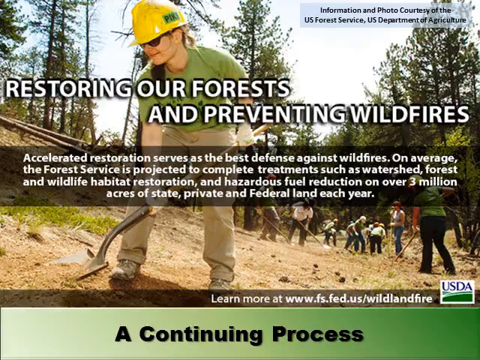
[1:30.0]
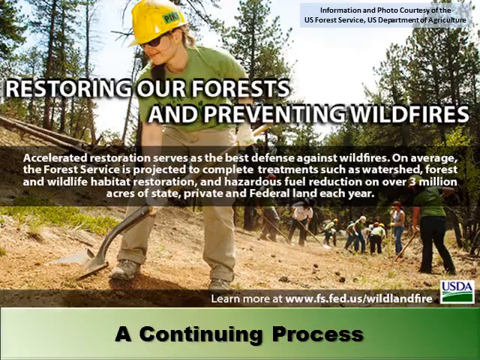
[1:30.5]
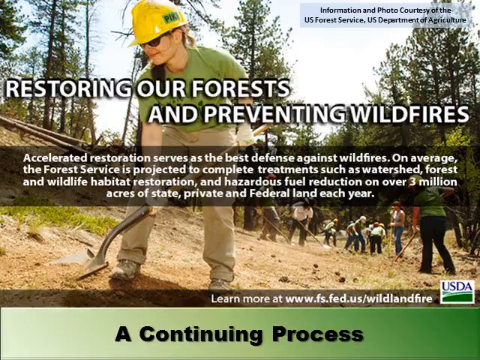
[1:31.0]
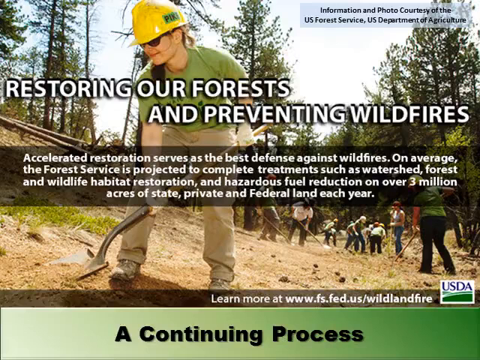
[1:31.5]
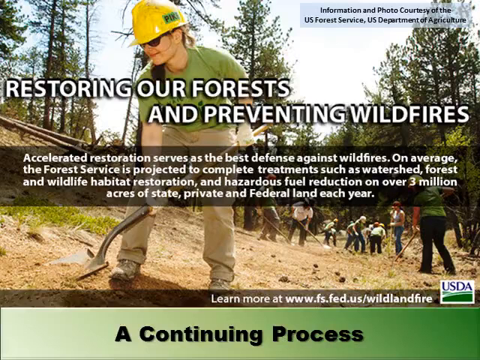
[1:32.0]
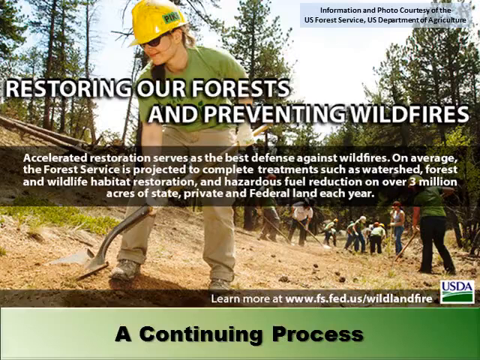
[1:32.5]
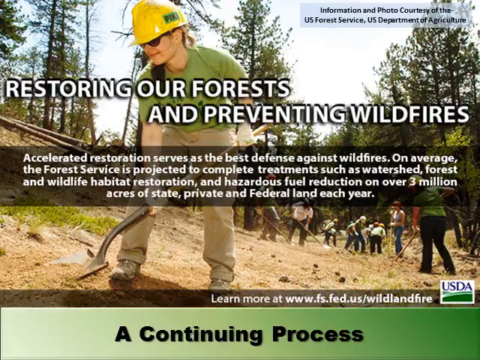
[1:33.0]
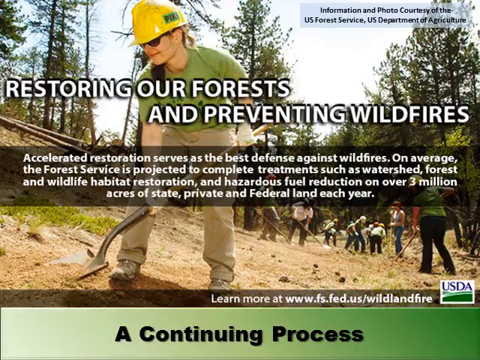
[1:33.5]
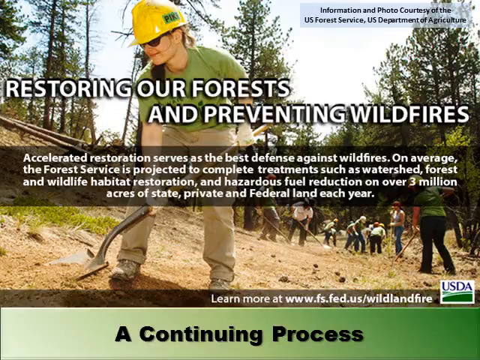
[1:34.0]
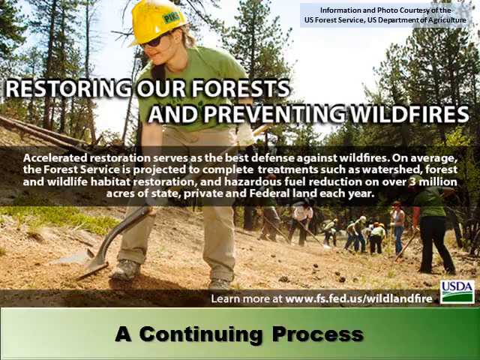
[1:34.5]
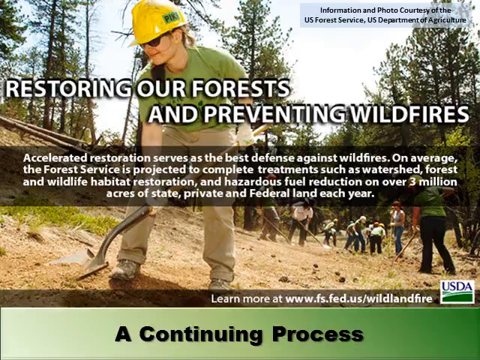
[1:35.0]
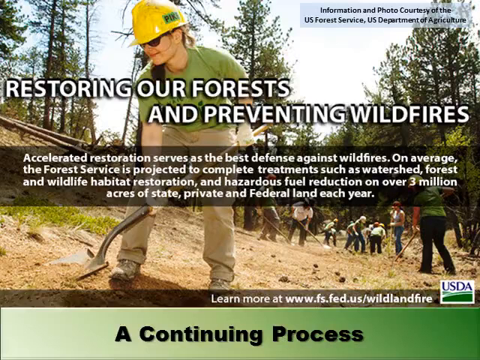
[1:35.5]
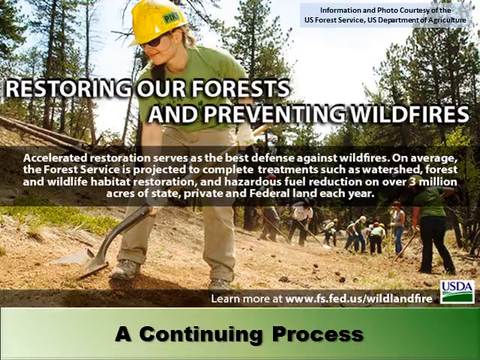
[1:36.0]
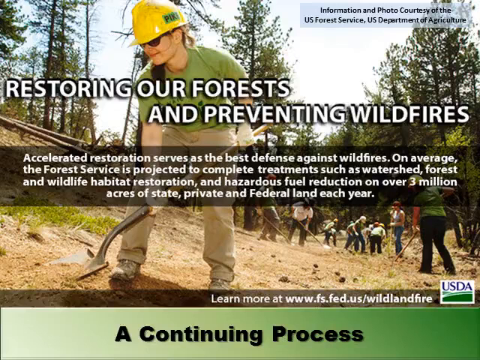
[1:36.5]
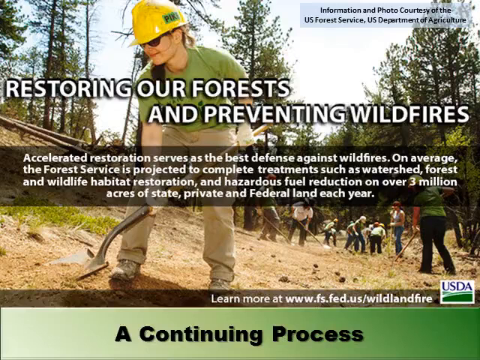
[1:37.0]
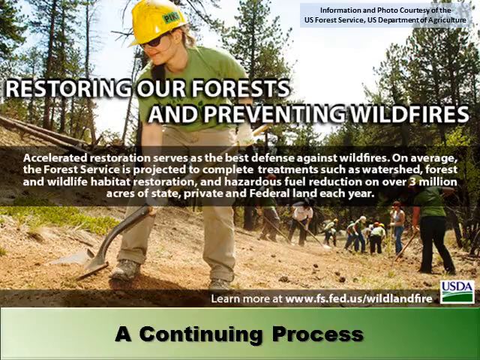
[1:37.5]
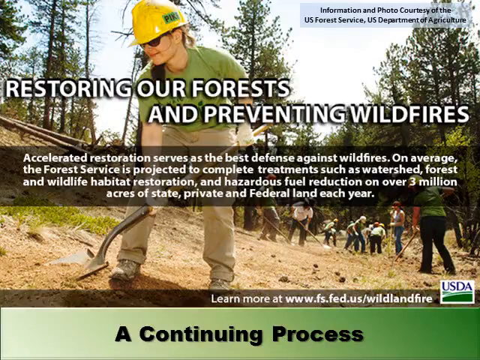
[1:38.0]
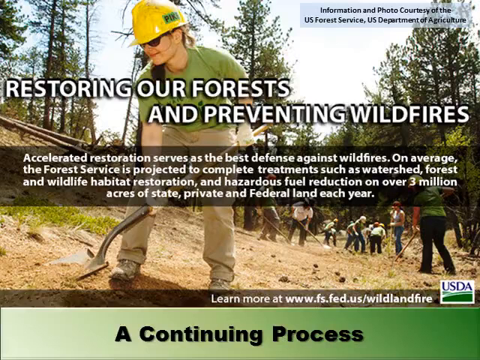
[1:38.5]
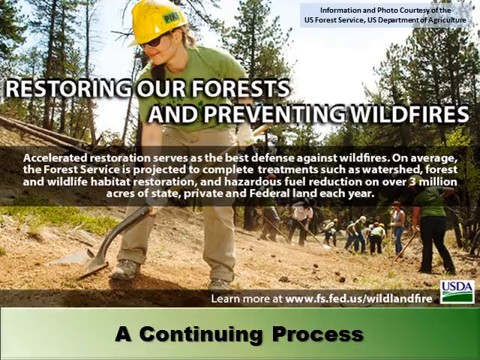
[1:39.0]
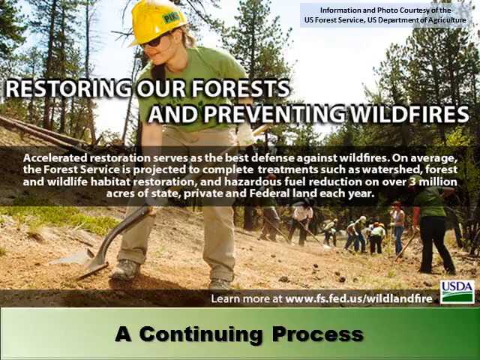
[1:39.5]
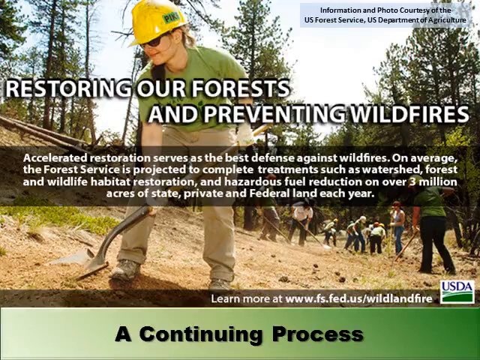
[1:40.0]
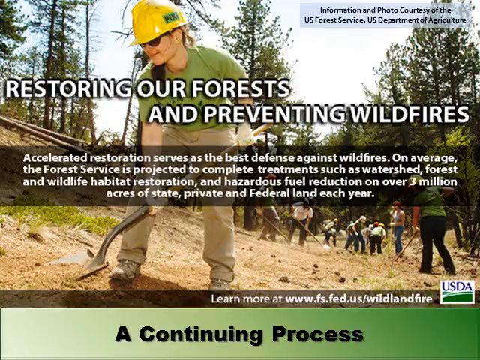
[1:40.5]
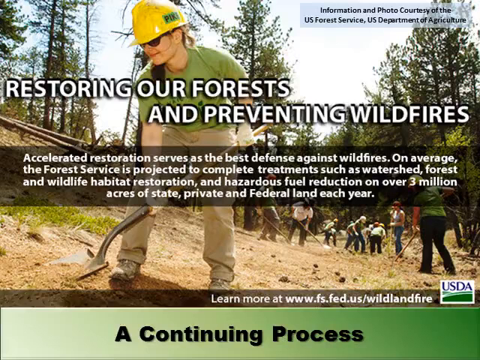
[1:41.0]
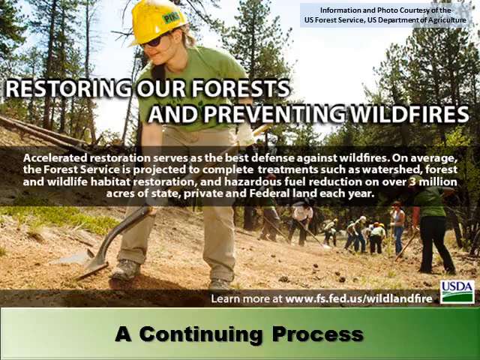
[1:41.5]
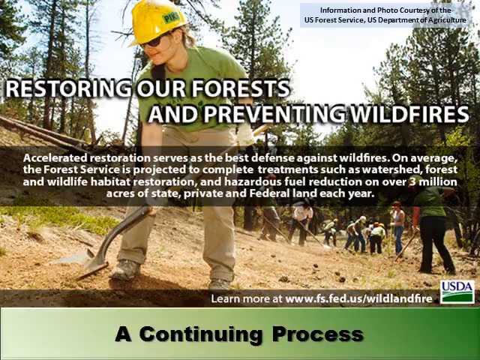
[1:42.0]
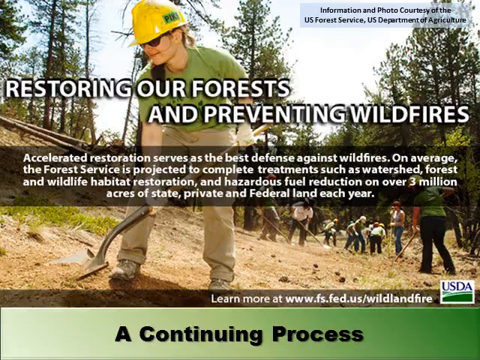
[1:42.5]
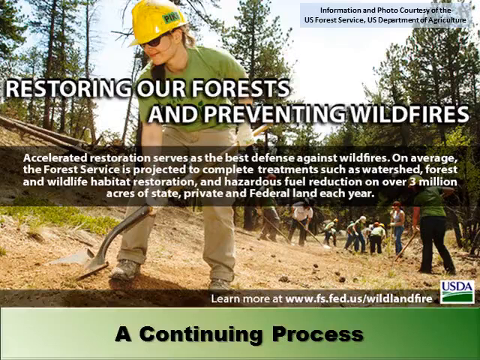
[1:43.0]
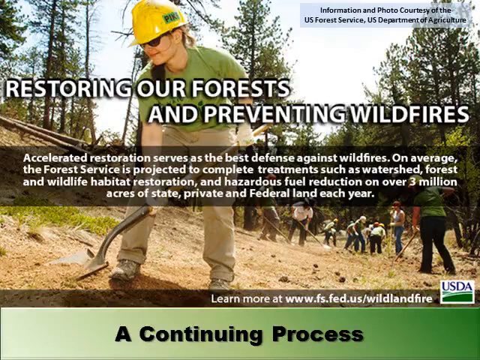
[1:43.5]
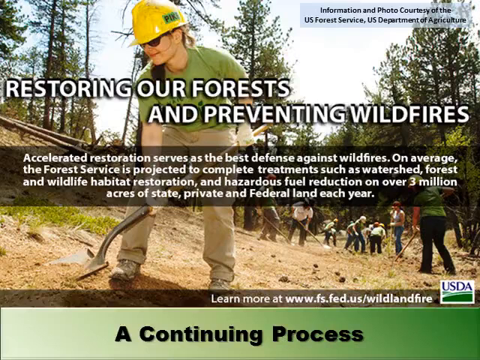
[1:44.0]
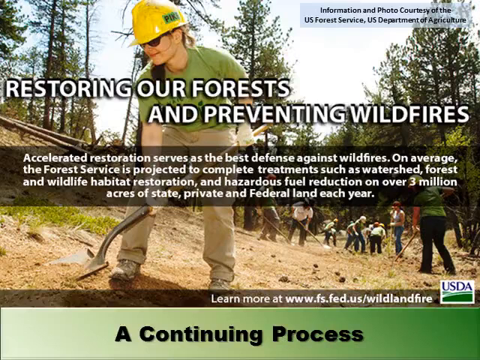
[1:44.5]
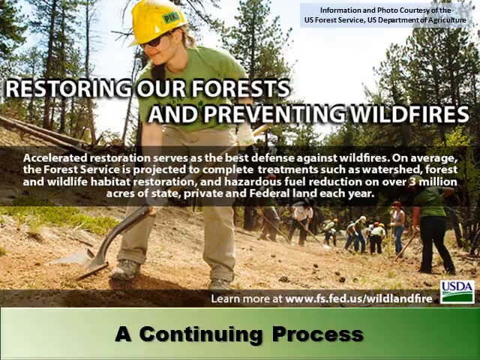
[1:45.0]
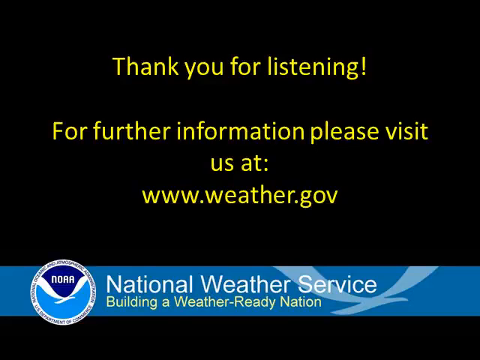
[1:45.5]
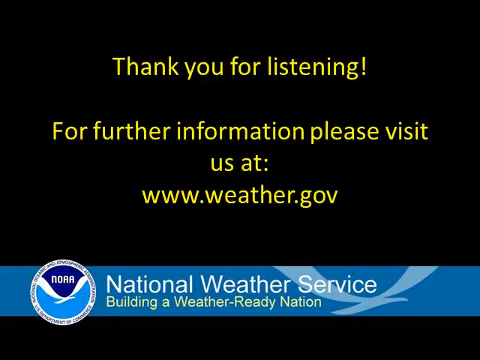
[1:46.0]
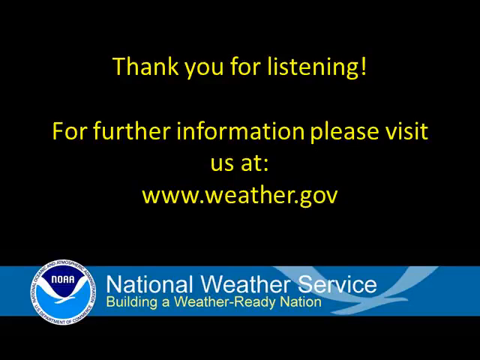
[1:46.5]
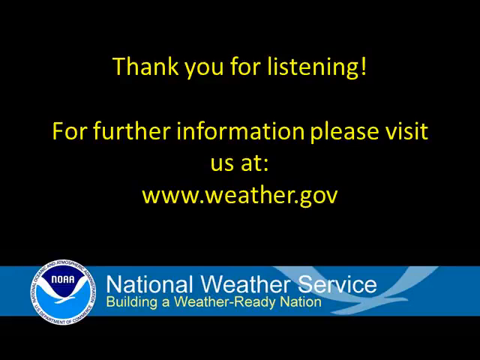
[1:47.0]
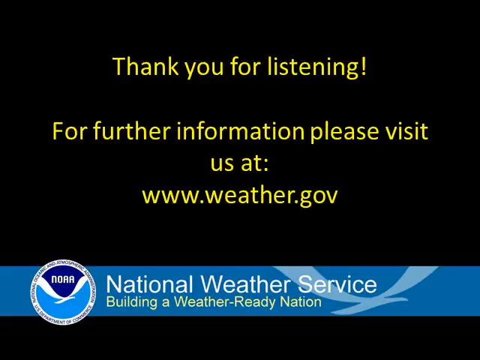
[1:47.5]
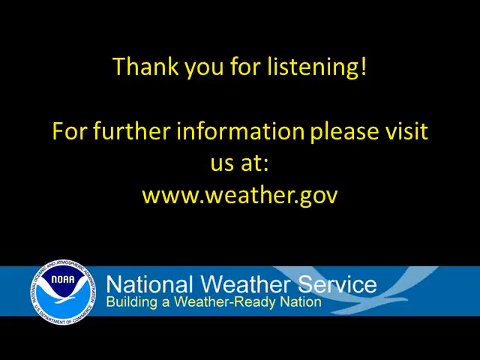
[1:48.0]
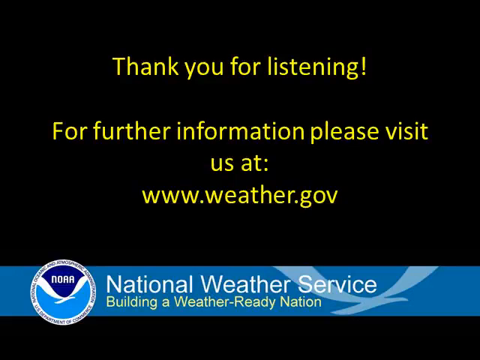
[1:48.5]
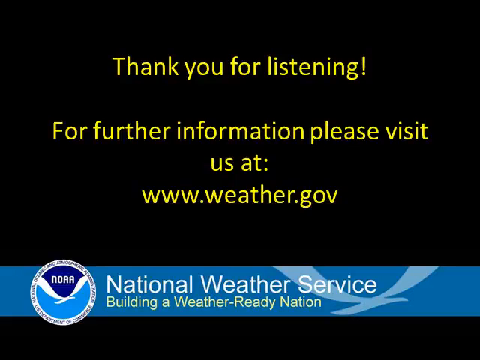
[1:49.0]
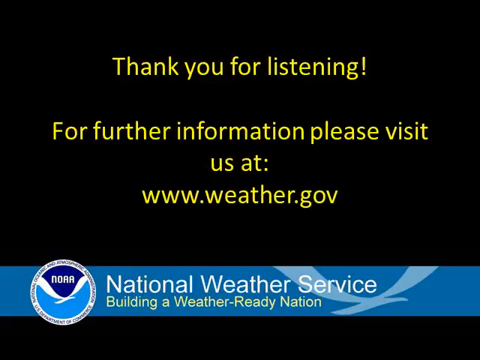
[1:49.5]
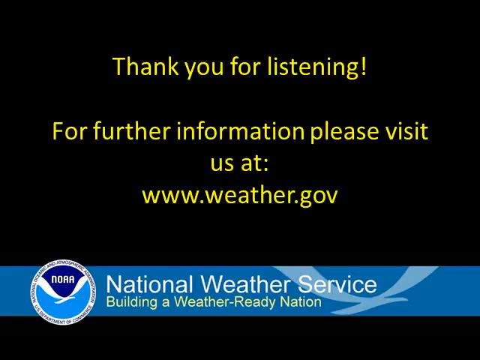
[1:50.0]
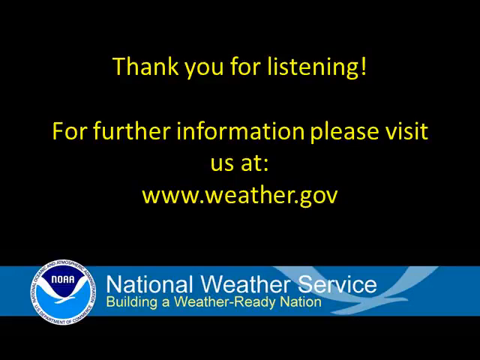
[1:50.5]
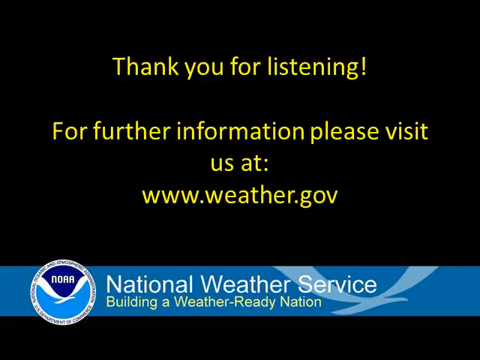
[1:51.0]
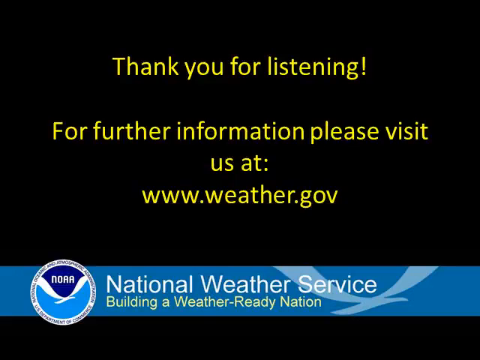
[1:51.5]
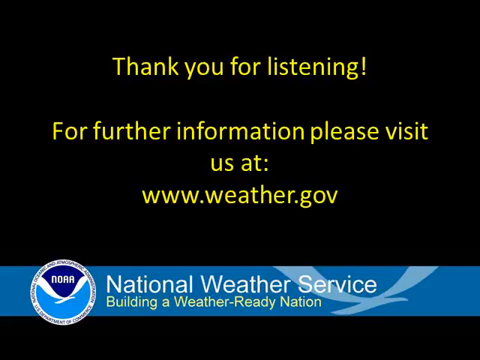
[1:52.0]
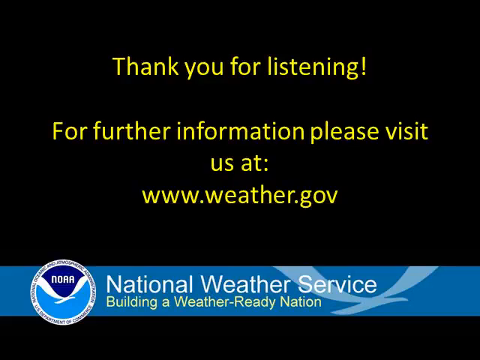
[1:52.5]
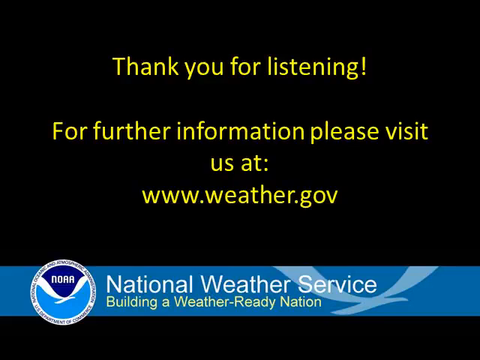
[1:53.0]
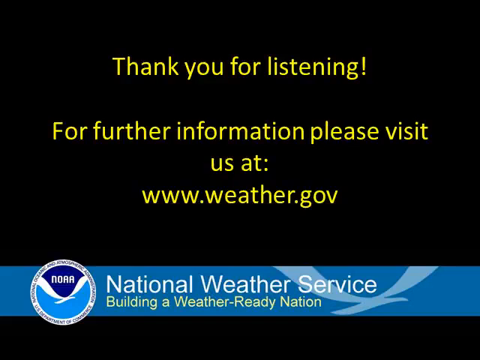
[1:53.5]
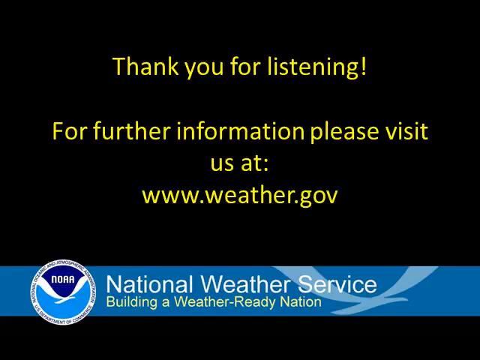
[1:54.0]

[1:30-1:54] The restoring our forests and preventing wildfires slide remains, with the same photo of volunteers clearing out a hillside, the same text and the USDA tag. The slide title at the bottom reads "A continuing process" in black letters on a green background with a gradient, light green on the left turning darker green toward the right. The ending credits are from the National Weather Service: a NOAA seal with yellow text above it reading "Thank you for listening. For further information, please visit weather.gov." This page stays on screen until the end.